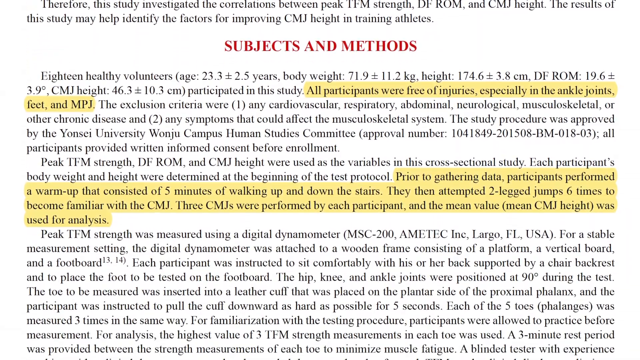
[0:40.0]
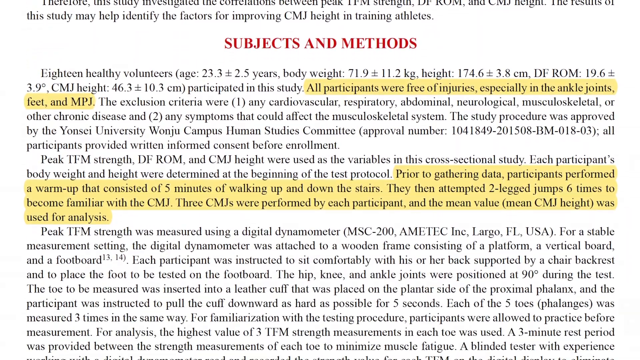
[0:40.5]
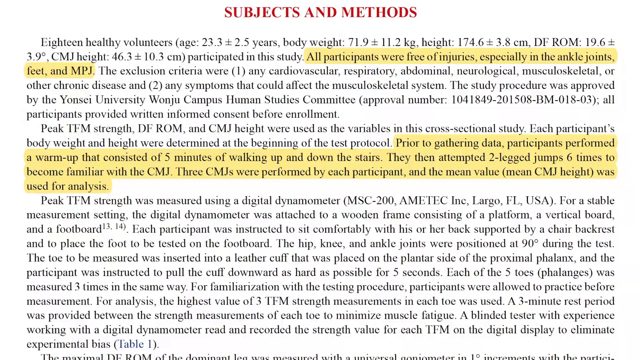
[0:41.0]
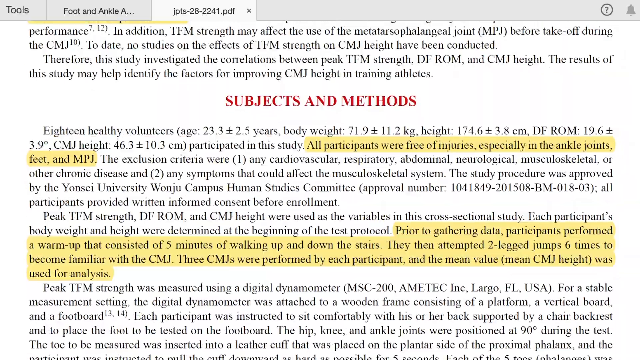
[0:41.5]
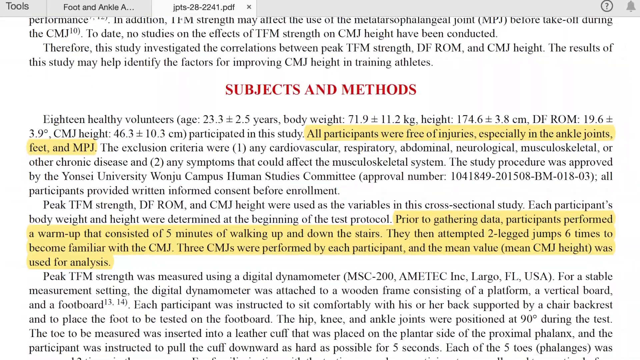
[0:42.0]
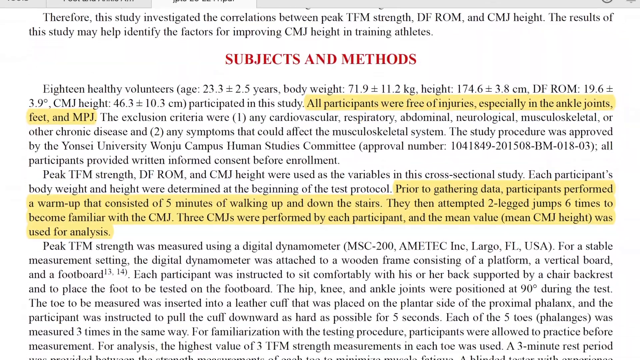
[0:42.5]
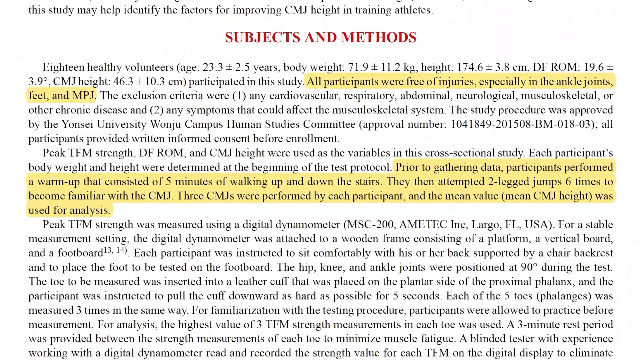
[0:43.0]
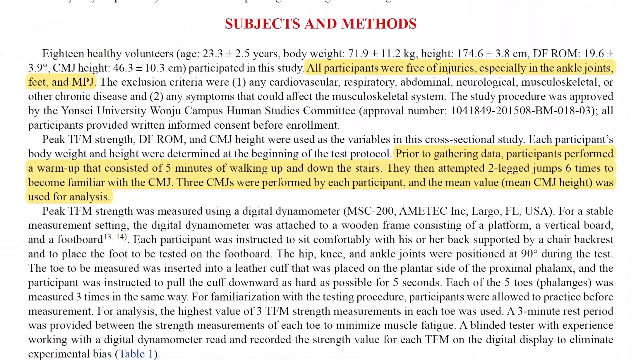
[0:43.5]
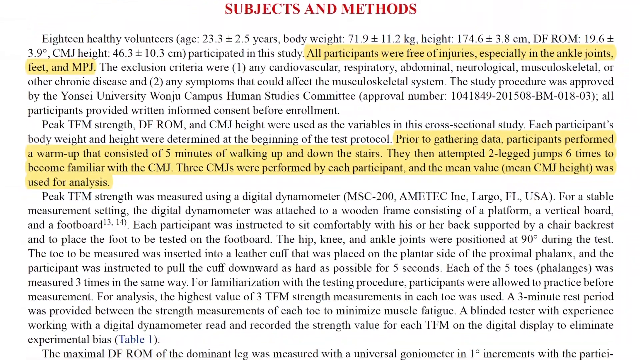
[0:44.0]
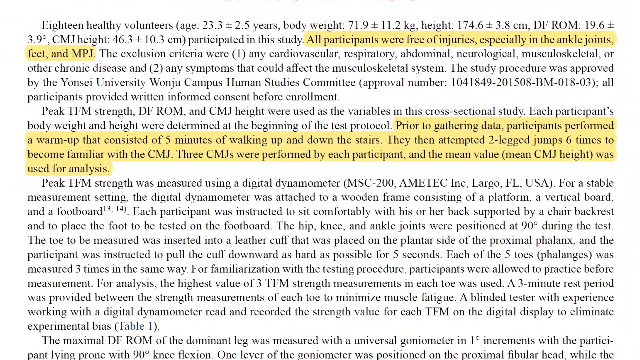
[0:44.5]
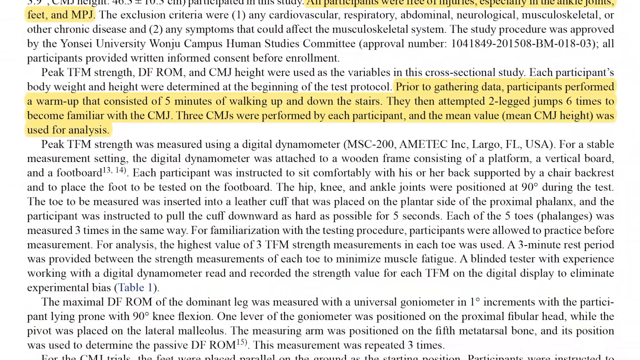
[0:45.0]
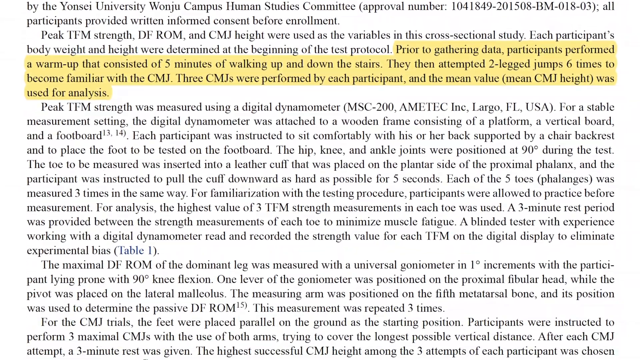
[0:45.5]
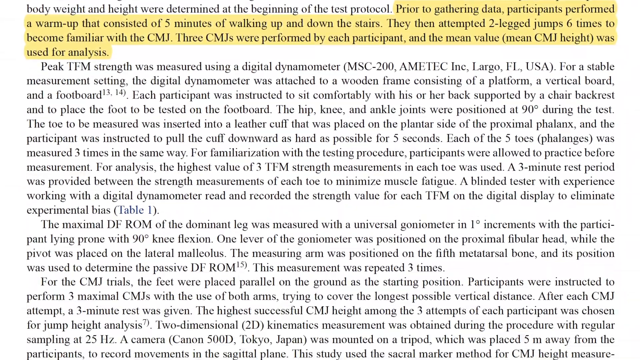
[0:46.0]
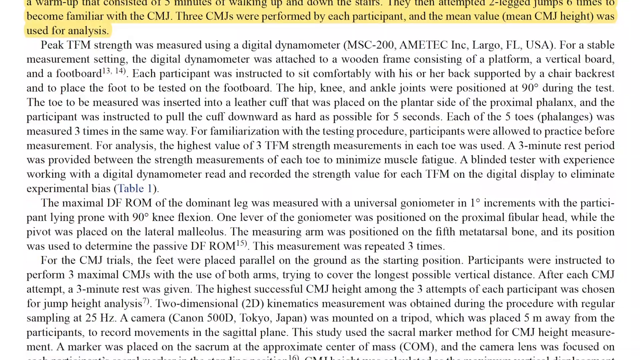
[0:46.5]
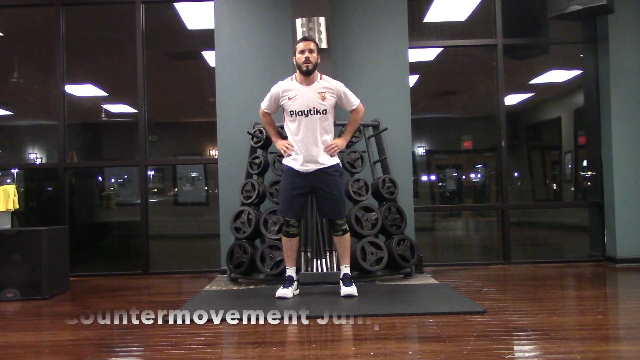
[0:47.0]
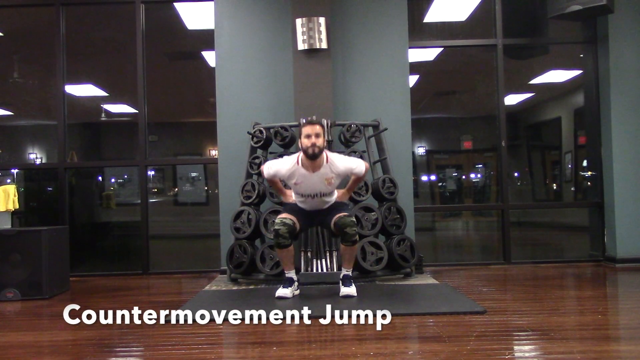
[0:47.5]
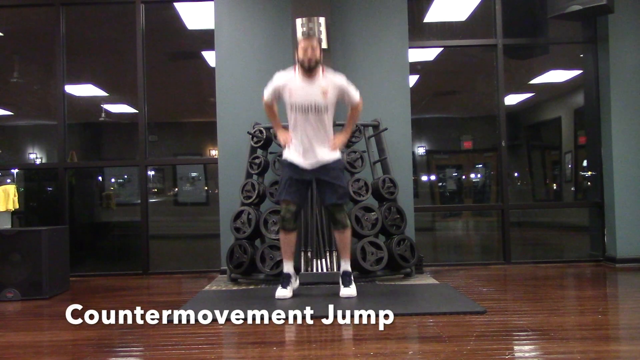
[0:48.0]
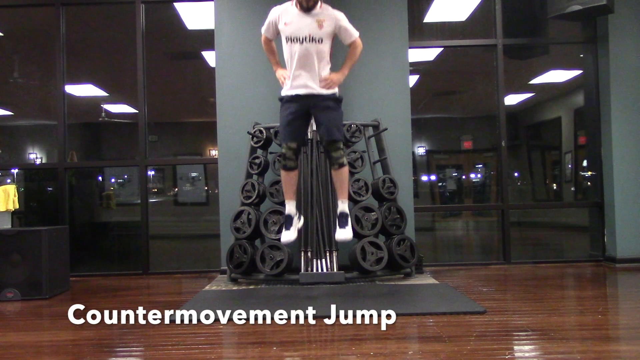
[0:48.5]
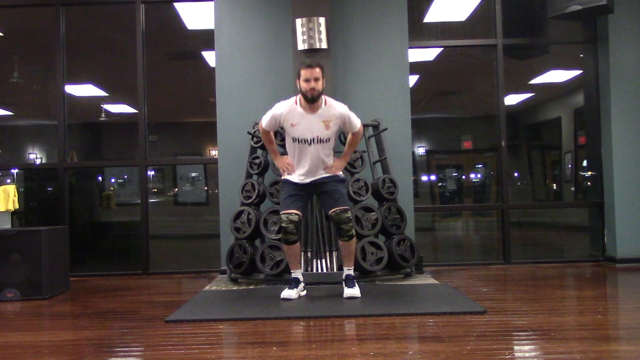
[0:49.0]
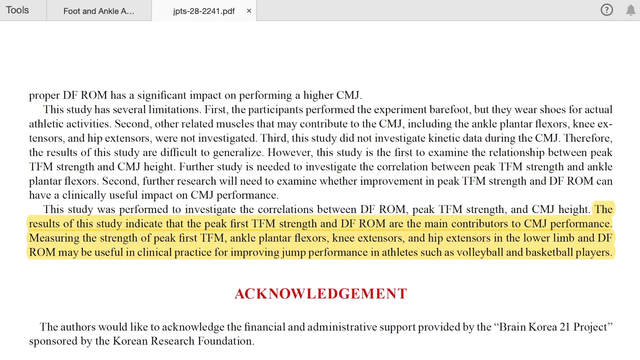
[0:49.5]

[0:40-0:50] A man is standing in a room with a wood floor and olive green walls. He wears a short-sleeved white shirt that says "play Tico" across the chest, black shorts, and white shoes with black tongues. Behind him, up against the wall, is a black weight rack holding weights. White text along the bottom of the screen says "counter jump". Behind him and the barbells, the whole front of the room is glass, made up of about eight large windows.